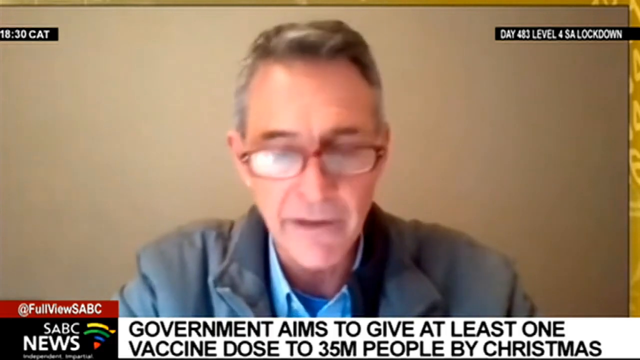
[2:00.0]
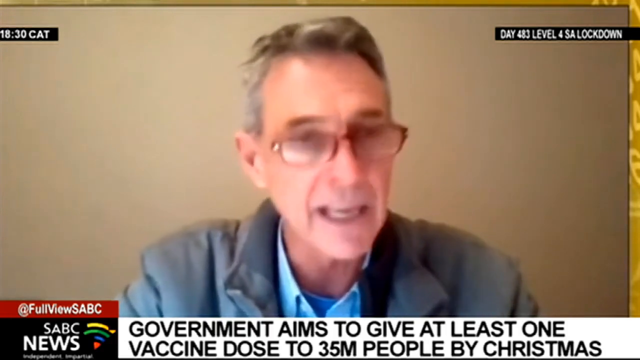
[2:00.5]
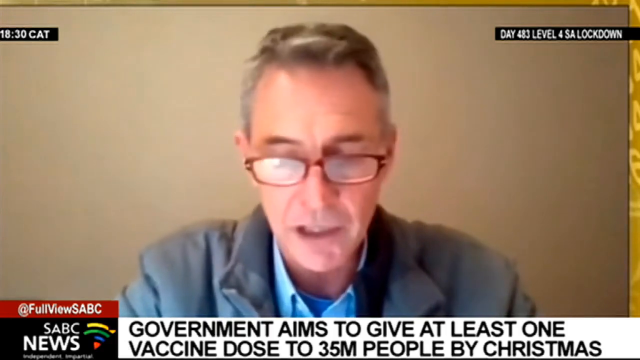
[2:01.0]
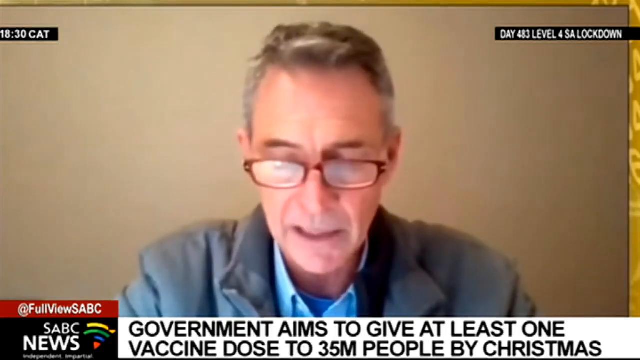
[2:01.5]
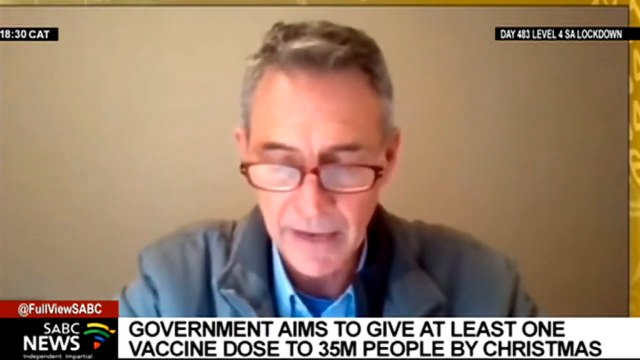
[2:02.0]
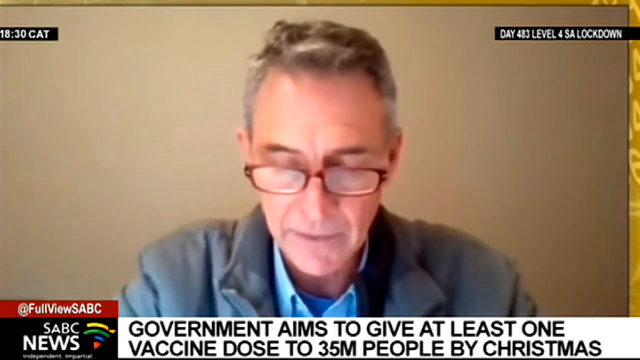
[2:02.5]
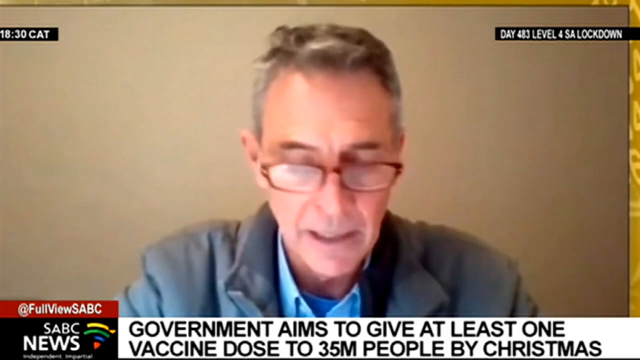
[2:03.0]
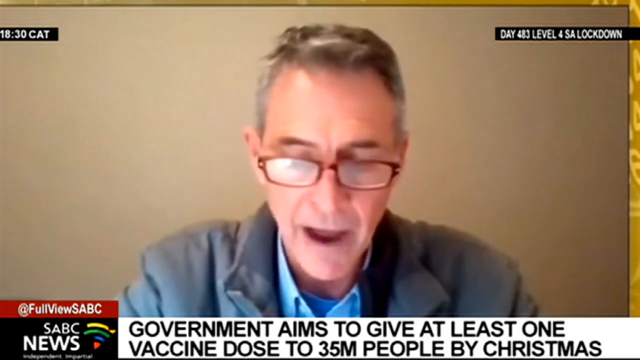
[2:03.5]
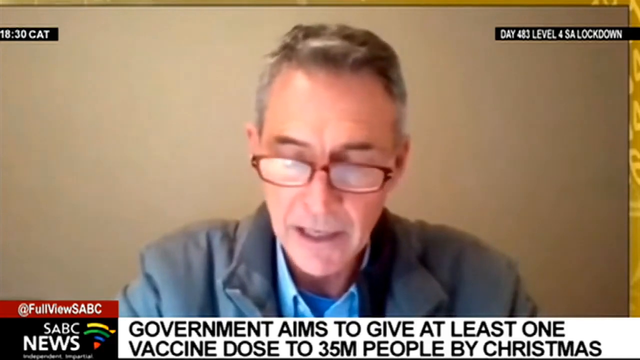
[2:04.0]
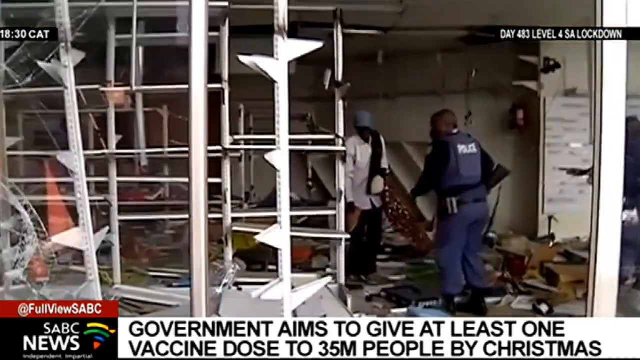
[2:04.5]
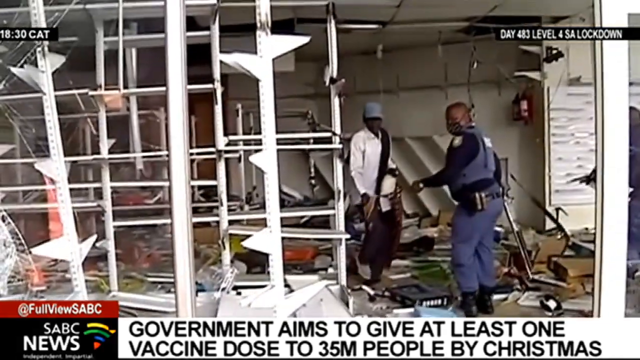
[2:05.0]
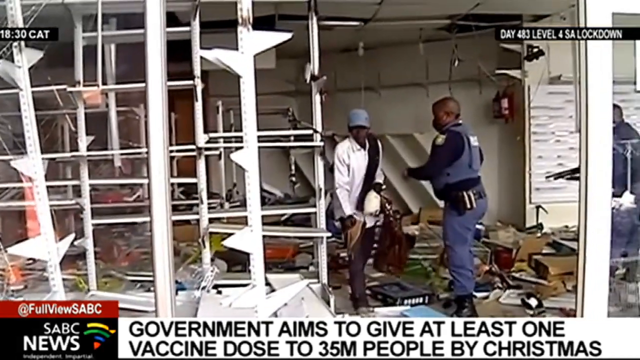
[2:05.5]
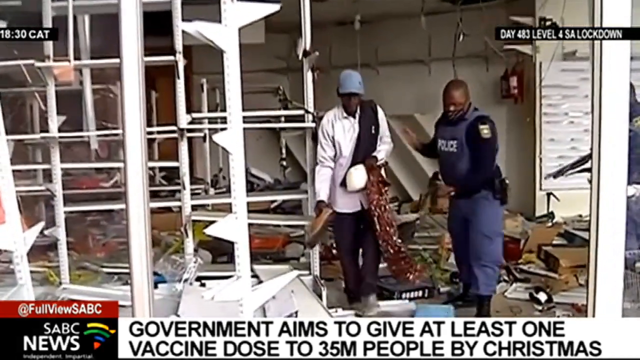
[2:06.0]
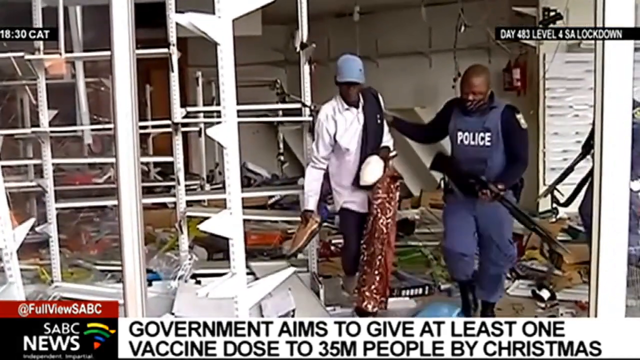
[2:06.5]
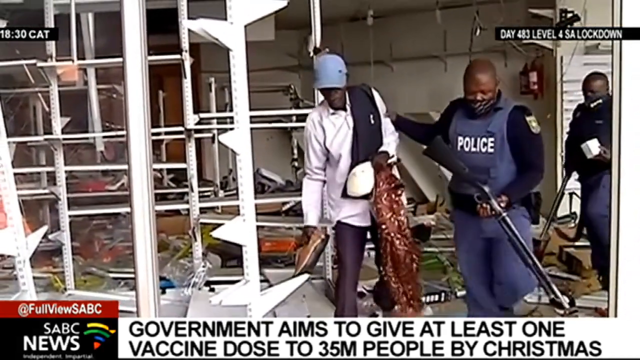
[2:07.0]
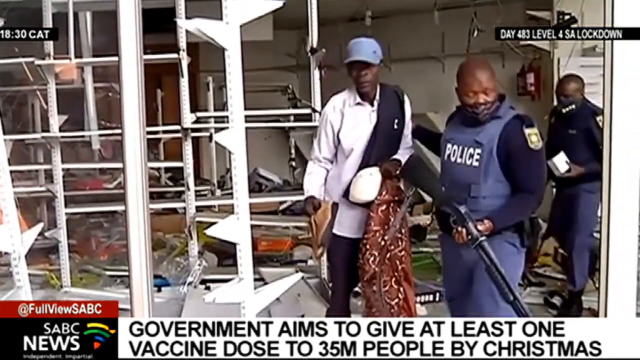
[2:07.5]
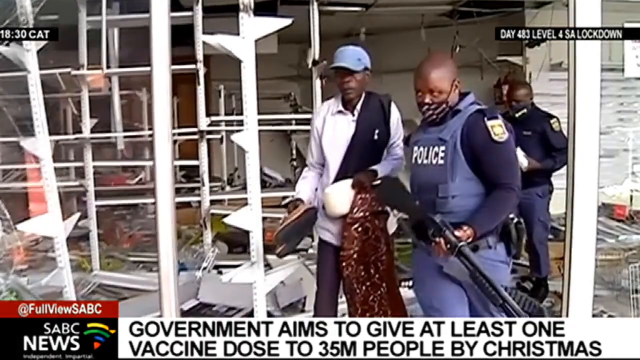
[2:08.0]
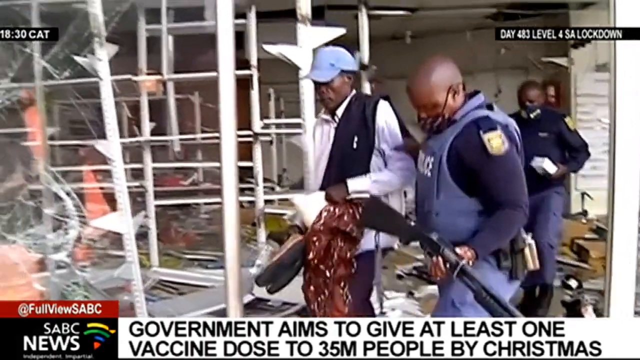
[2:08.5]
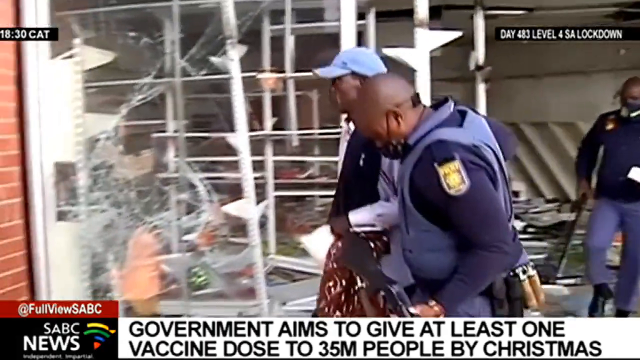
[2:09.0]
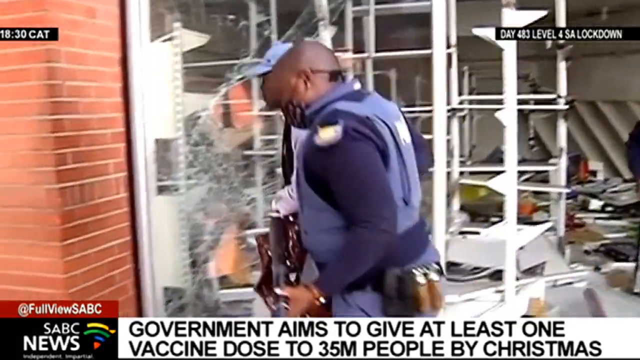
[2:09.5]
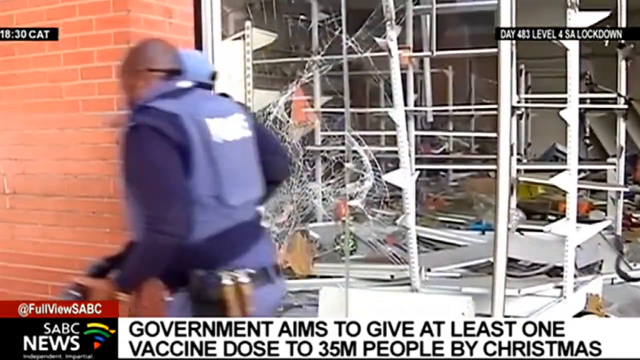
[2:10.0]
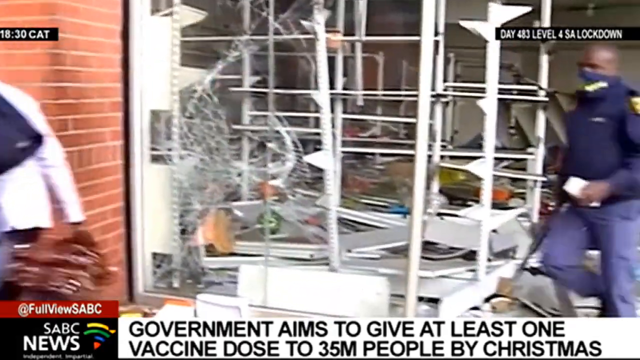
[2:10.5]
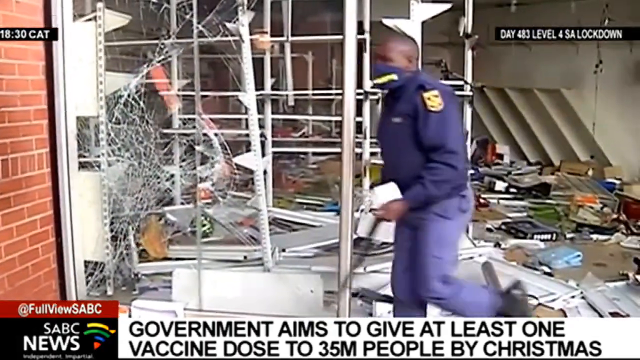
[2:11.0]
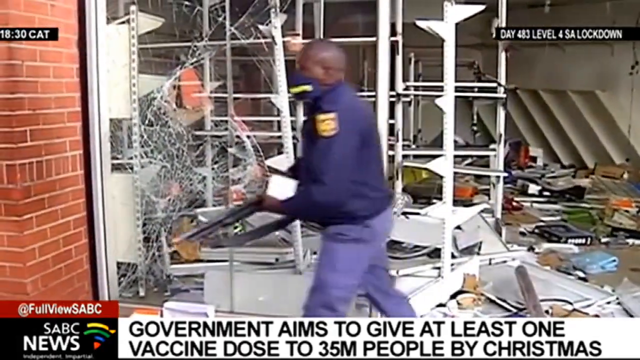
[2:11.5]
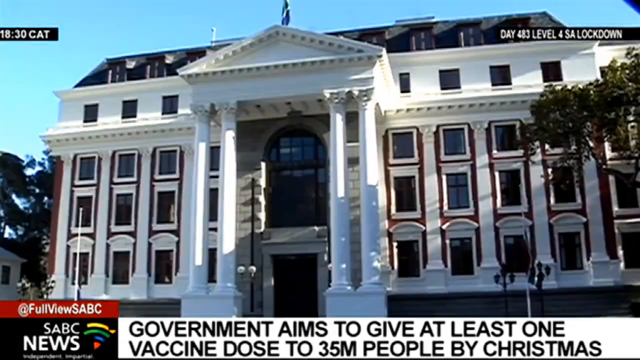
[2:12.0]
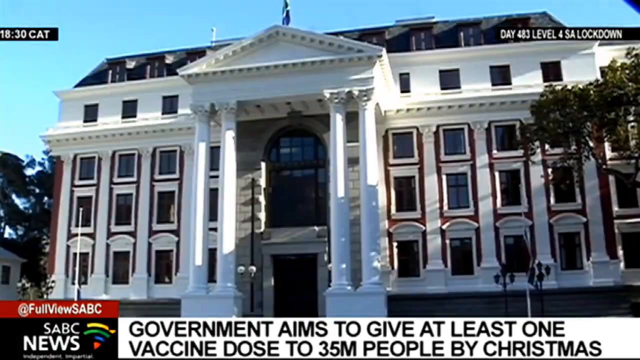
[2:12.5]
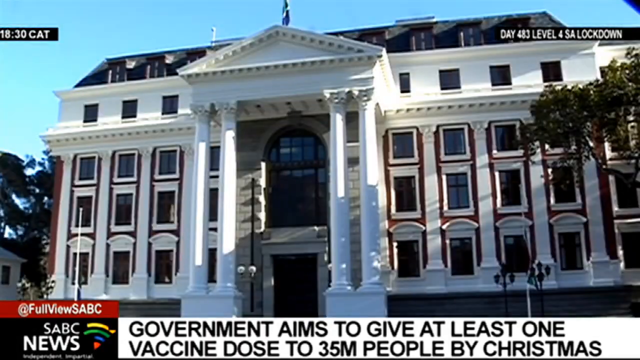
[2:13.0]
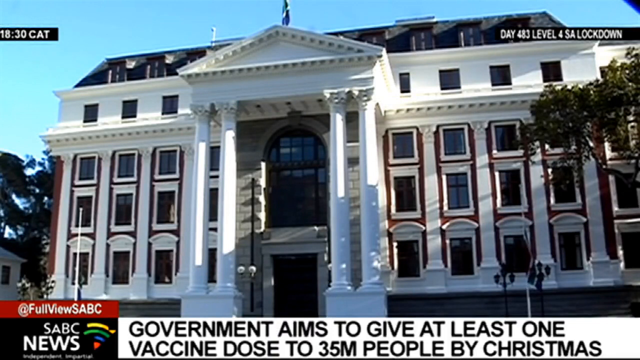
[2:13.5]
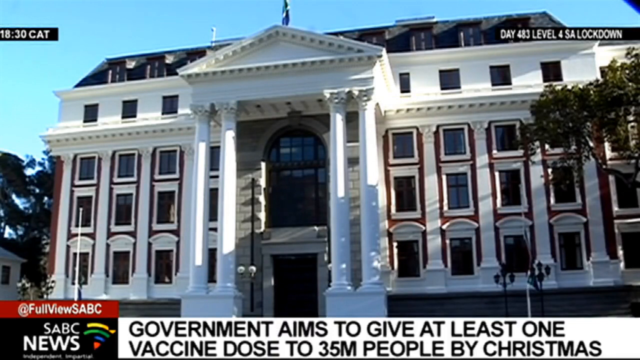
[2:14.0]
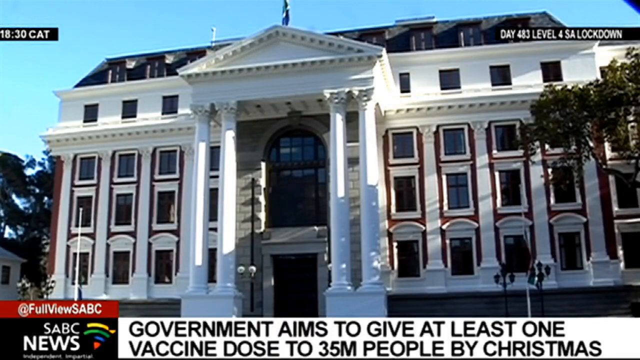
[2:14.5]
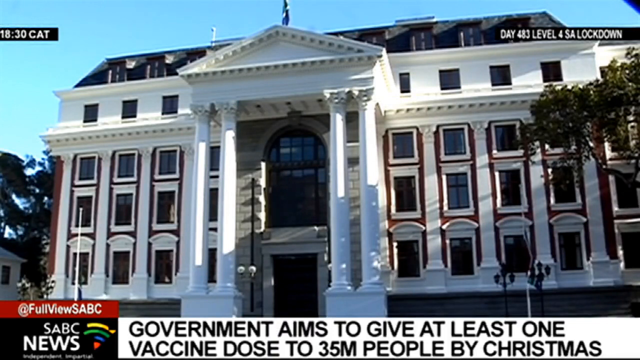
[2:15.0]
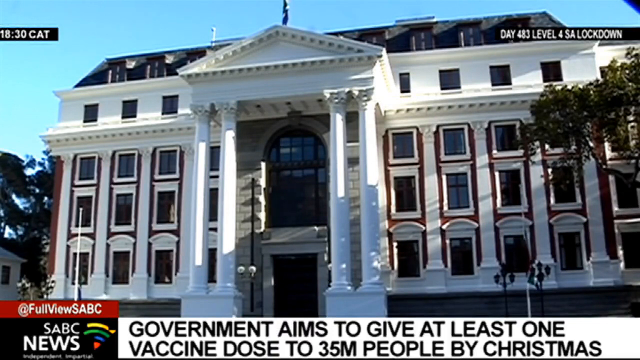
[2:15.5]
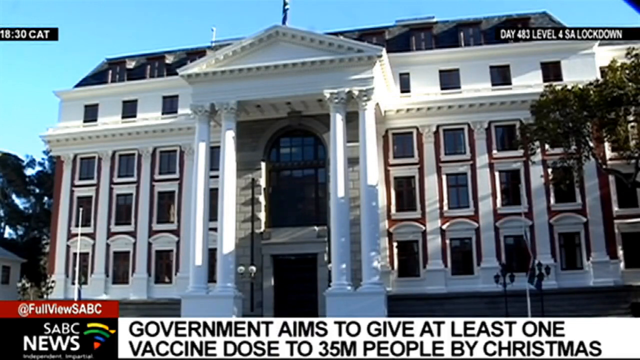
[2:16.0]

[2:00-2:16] The man continues speaking, appearing to glance down and read off a paper. The footage then shows what looks like police evacuating people from a damaged building, where everything inside is broken and thrown on the floor. The officers are heavily armed and wear large bulletproof vests, and they seem to be roughly escorting a man out of the building. The windows of the store that was broken into are shattered, possibly footage of a riot or similar event. Finally, what looks like a government building appears: white, with large columns at the front and brown shutters over the windows.